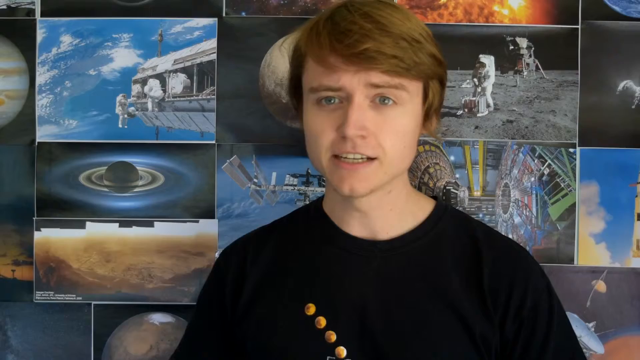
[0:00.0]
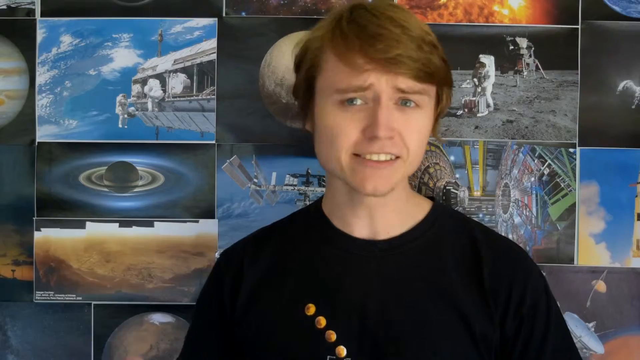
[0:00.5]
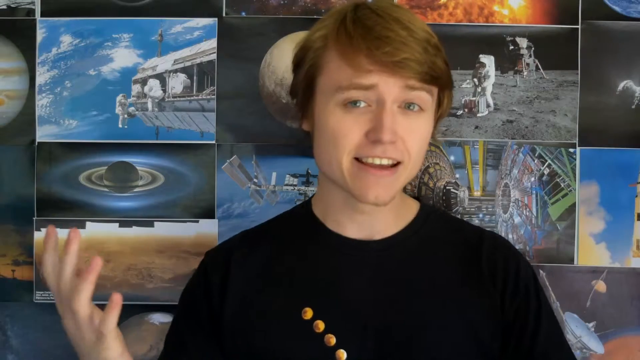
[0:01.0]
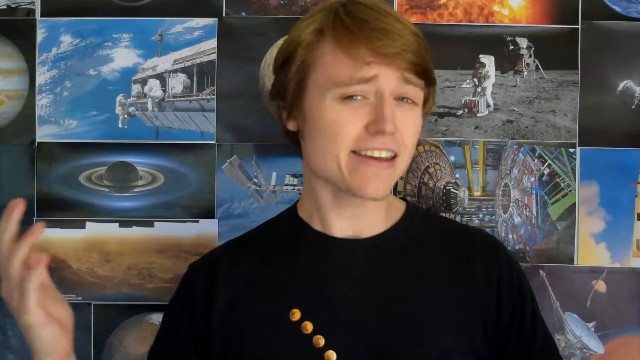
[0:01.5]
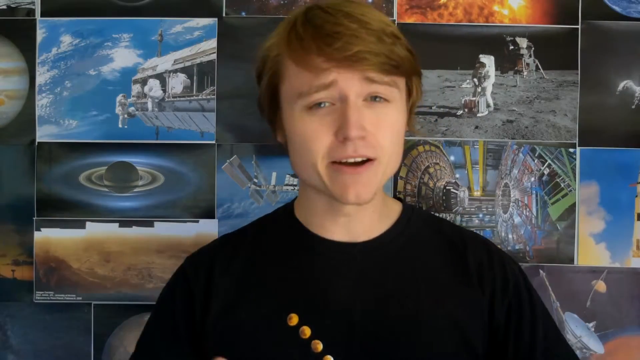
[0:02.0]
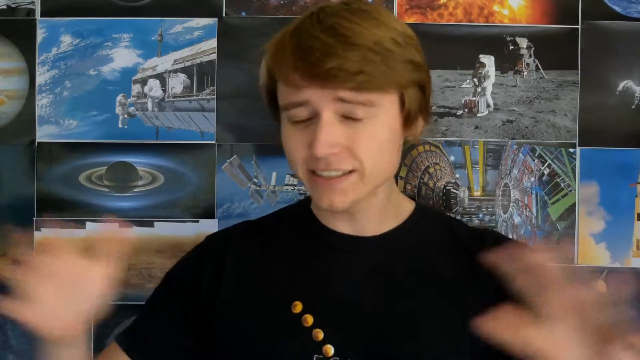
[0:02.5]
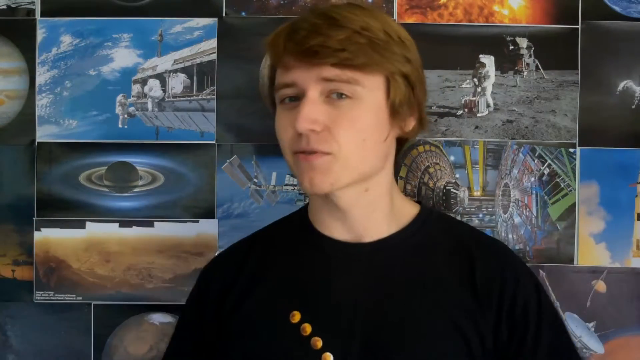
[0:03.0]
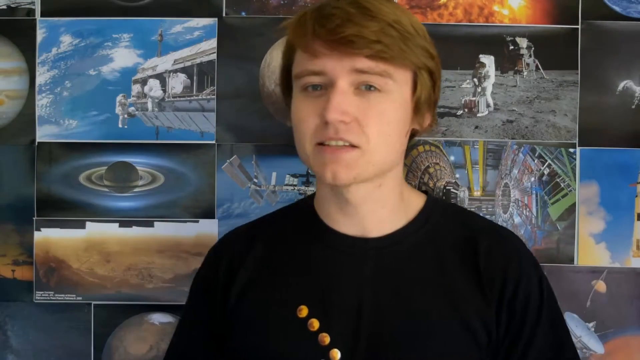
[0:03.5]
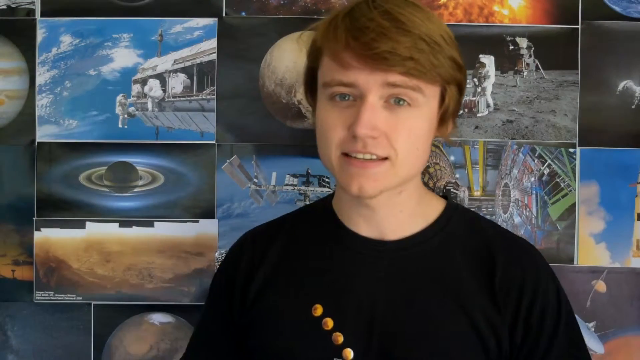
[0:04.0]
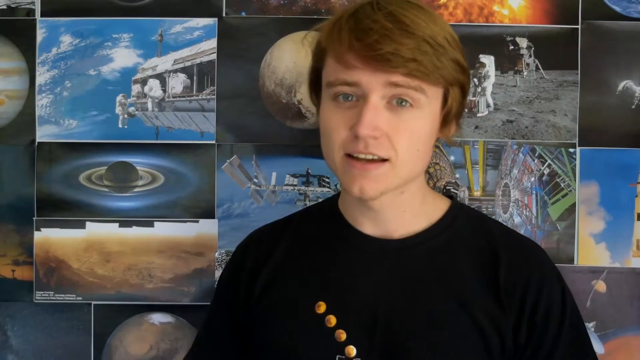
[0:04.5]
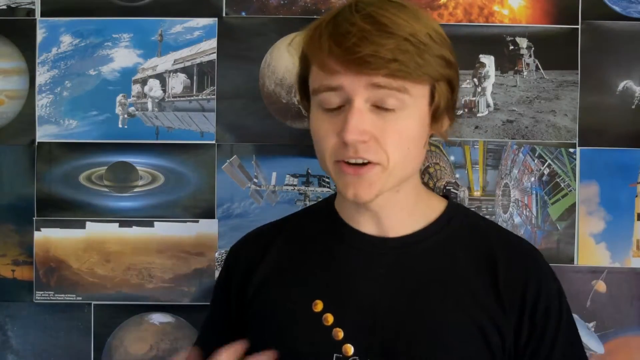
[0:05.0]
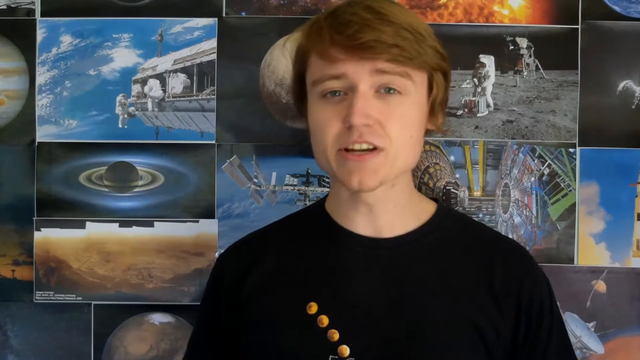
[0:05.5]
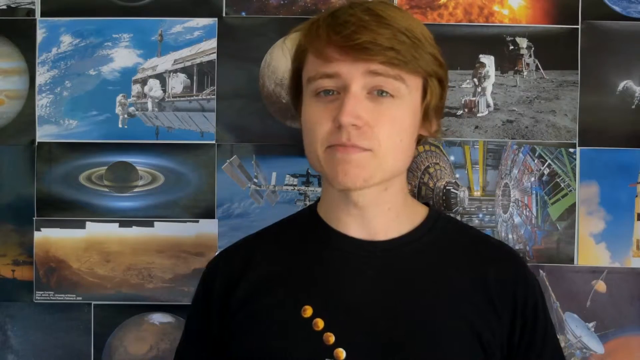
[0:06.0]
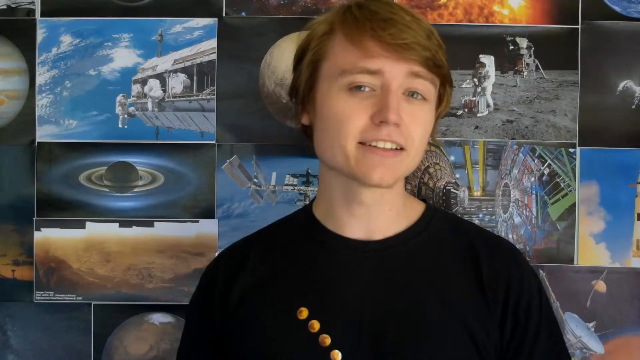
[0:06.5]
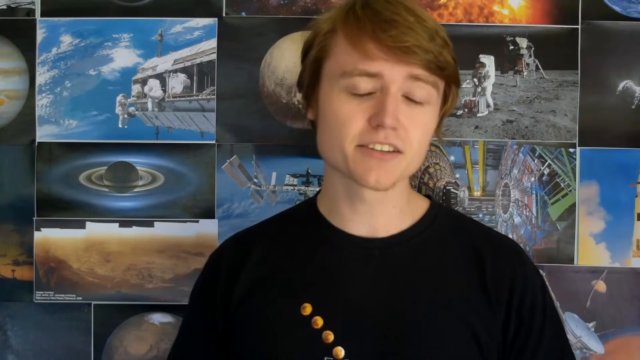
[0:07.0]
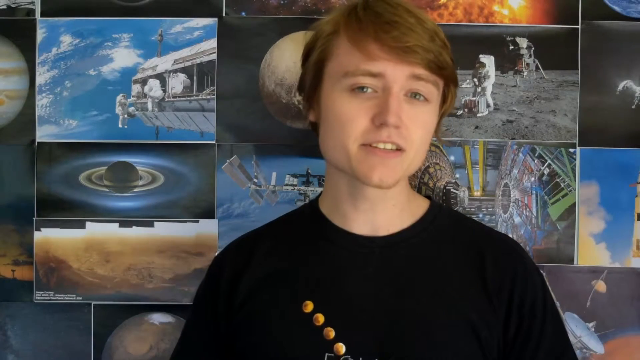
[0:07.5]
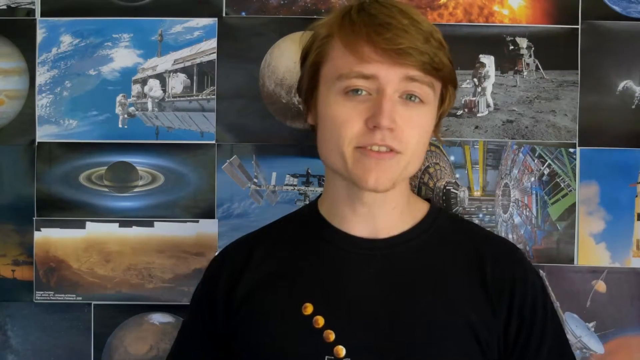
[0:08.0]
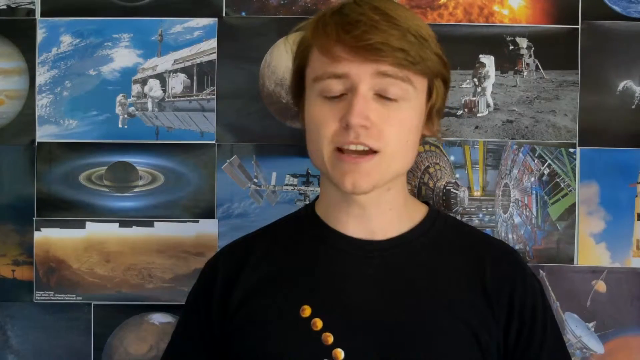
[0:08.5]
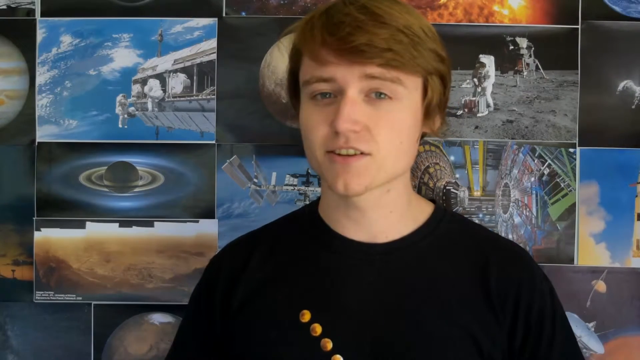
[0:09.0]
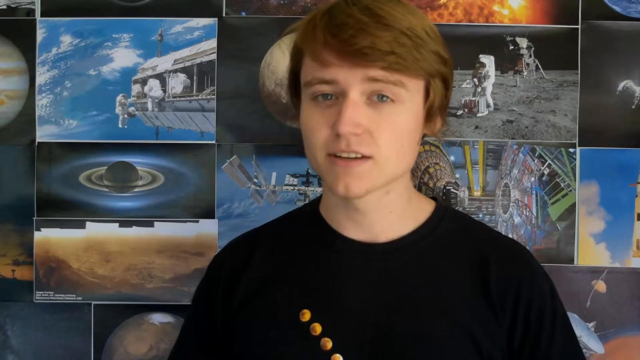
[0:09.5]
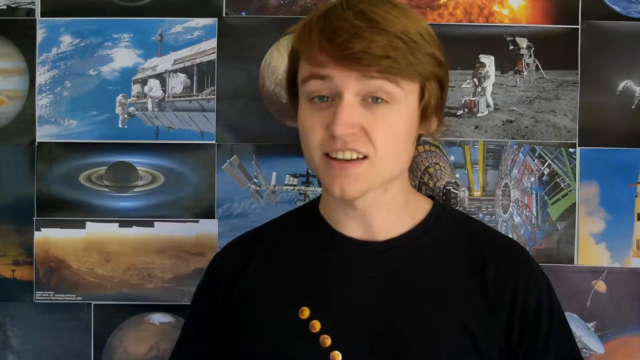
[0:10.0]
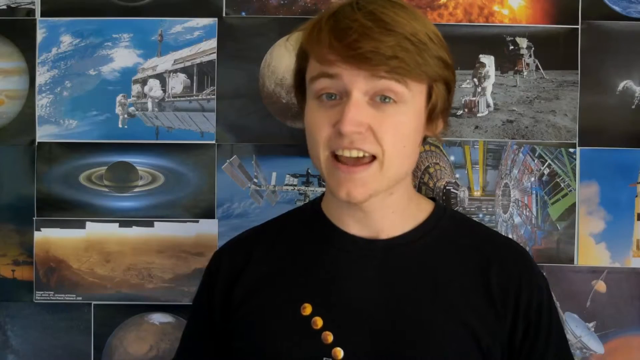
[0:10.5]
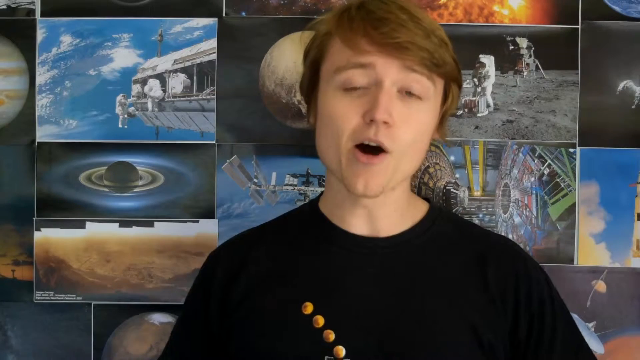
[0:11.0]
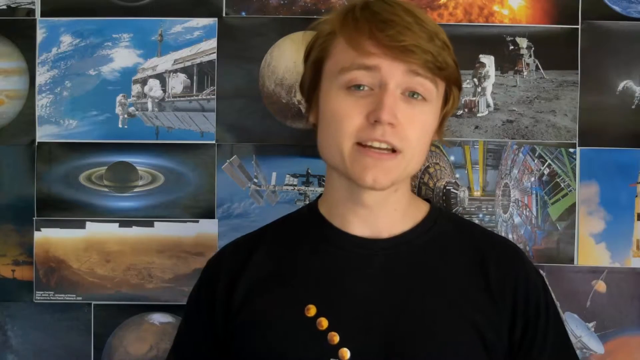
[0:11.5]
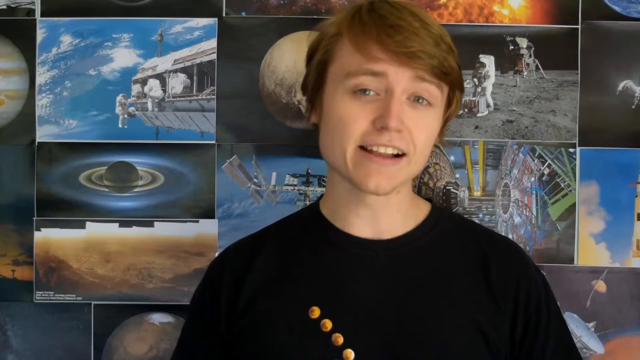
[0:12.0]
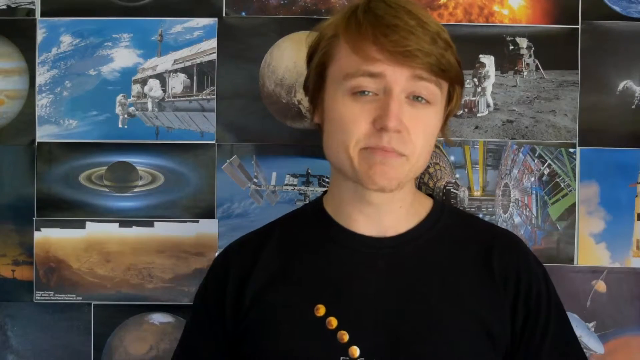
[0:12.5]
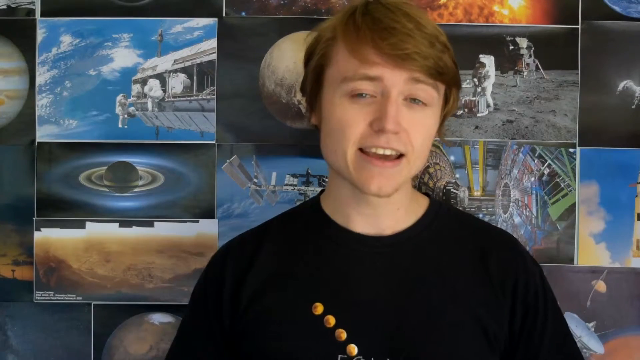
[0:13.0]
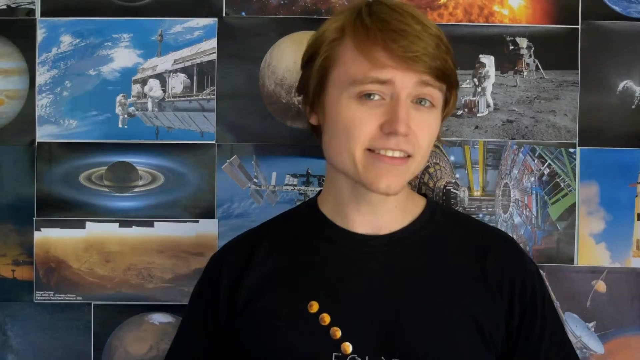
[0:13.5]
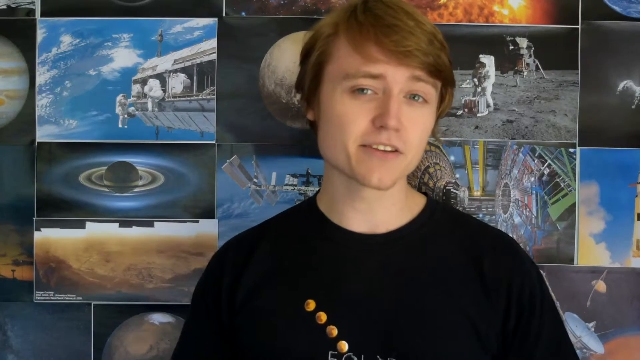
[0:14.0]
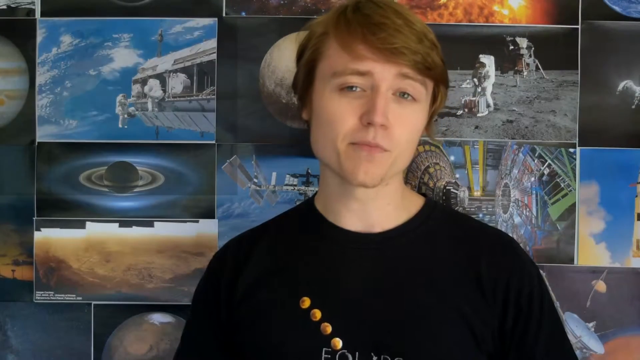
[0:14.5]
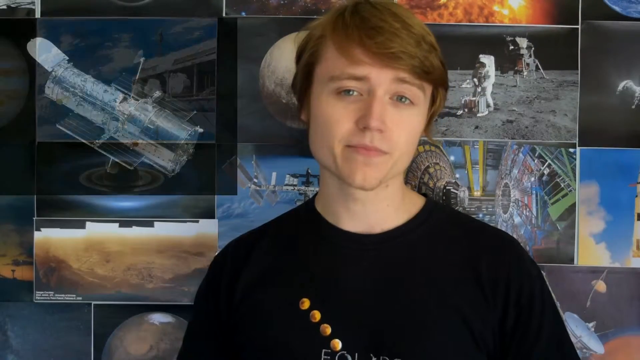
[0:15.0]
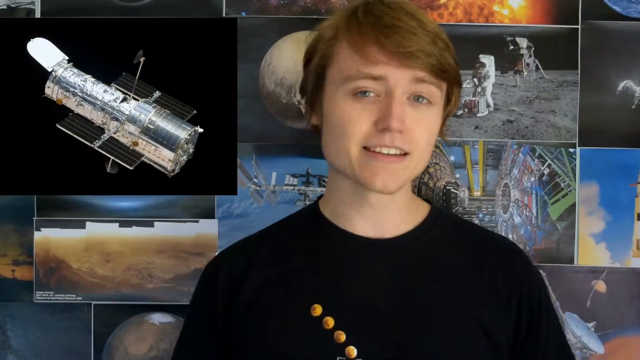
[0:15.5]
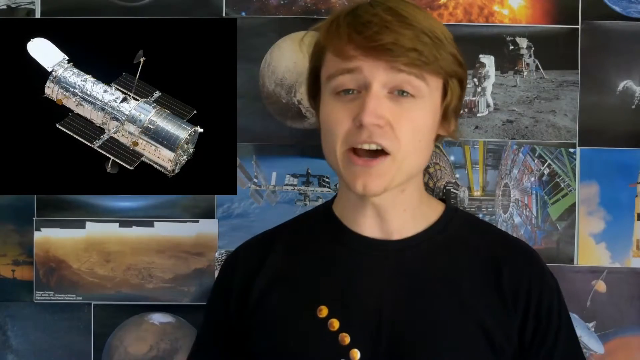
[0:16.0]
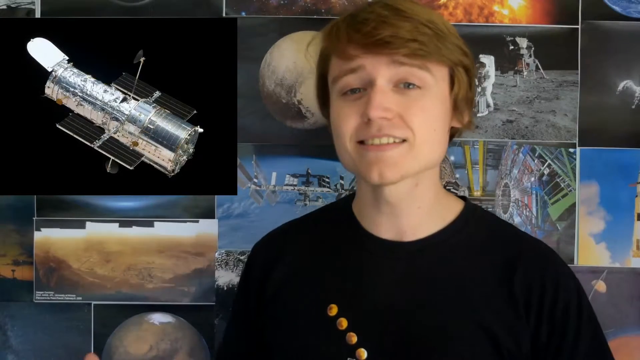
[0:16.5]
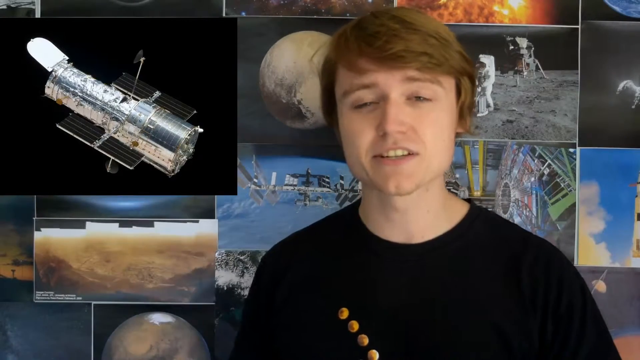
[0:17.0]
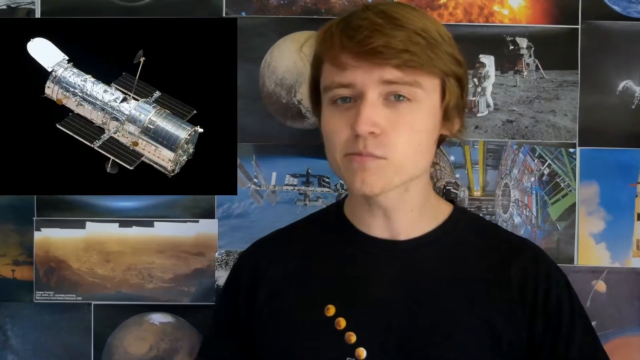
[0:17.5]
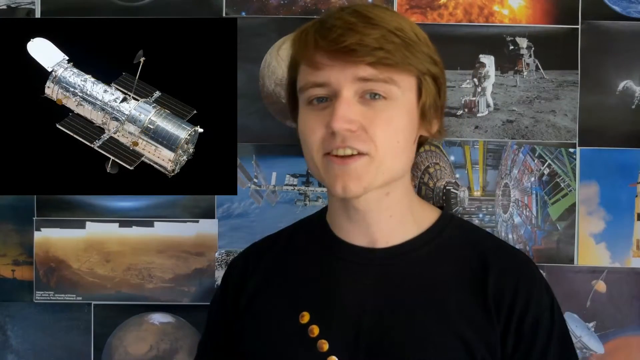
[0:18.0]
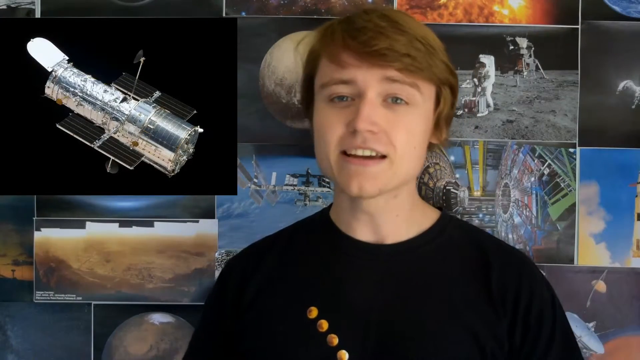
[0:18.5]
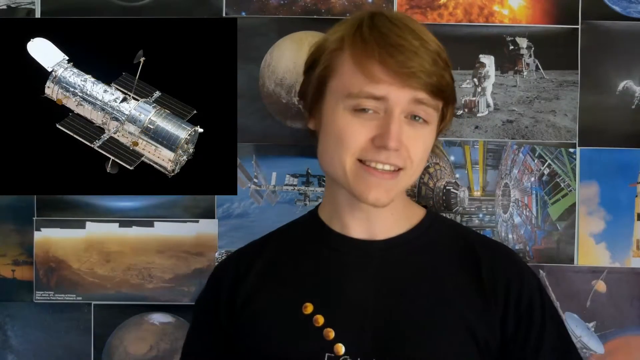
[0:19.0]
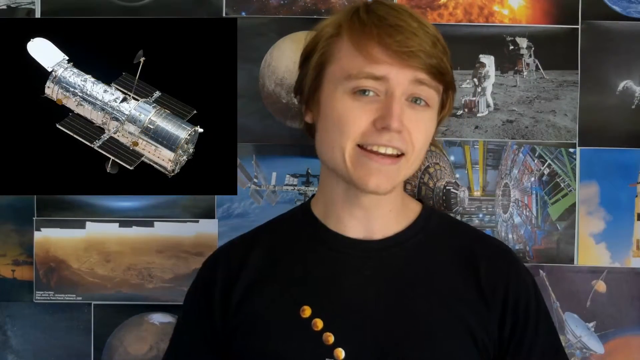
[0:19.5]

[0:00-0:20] A lot of pictures appear, including pictures of astronauts and many things about the sky. What seems to be a man walks on a different planet, apparently the moon. There are pictures of the International Space Station and many other astronomical things, and a boy is possibly talking.